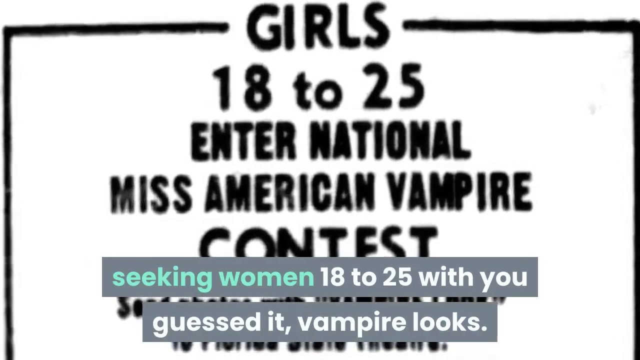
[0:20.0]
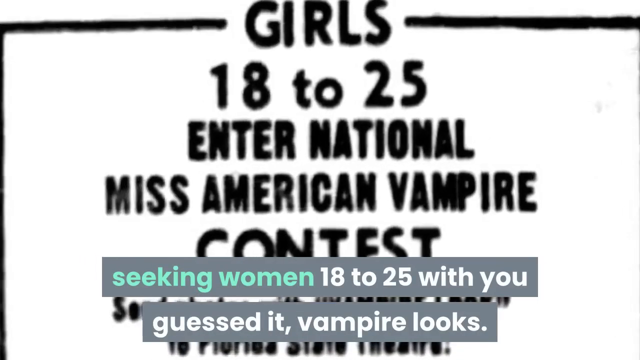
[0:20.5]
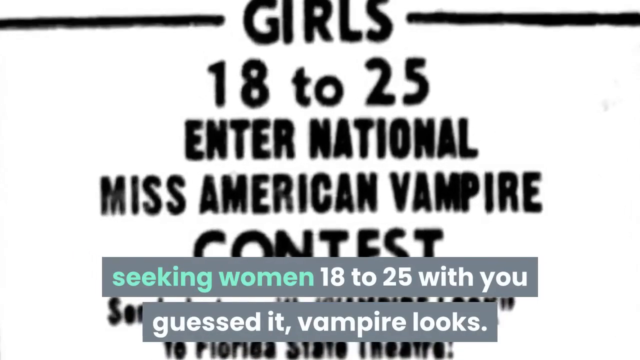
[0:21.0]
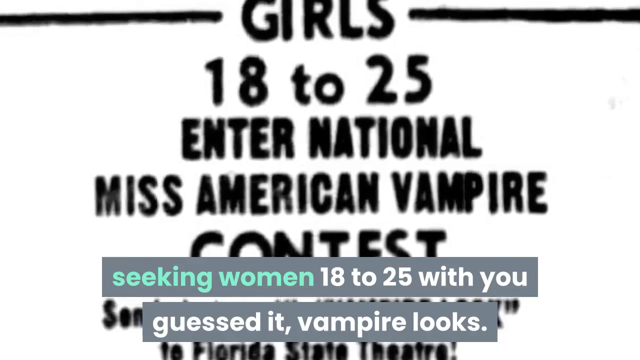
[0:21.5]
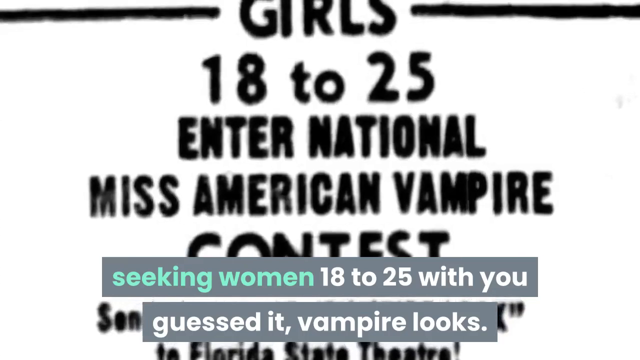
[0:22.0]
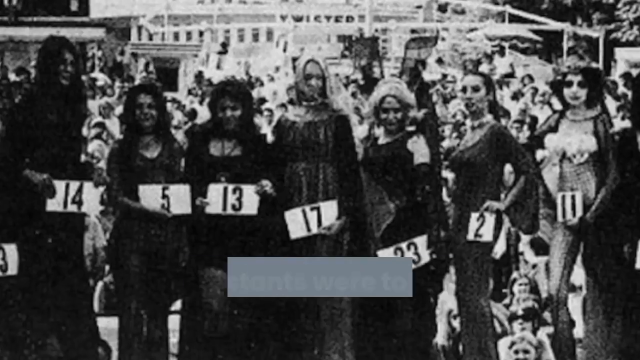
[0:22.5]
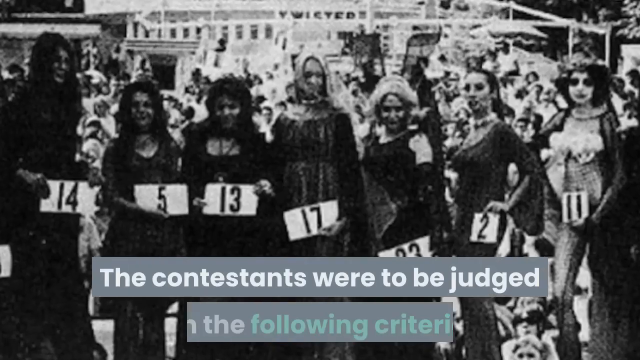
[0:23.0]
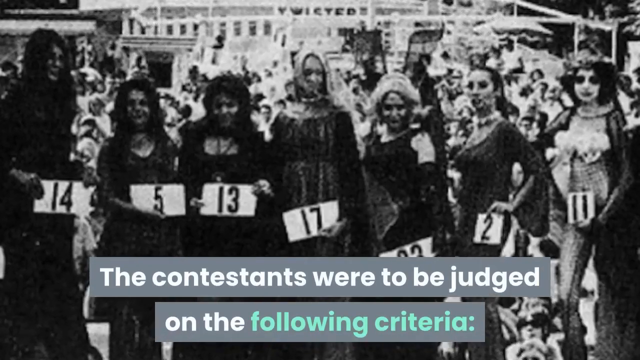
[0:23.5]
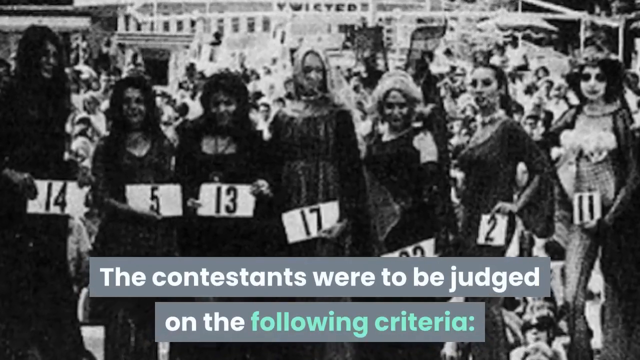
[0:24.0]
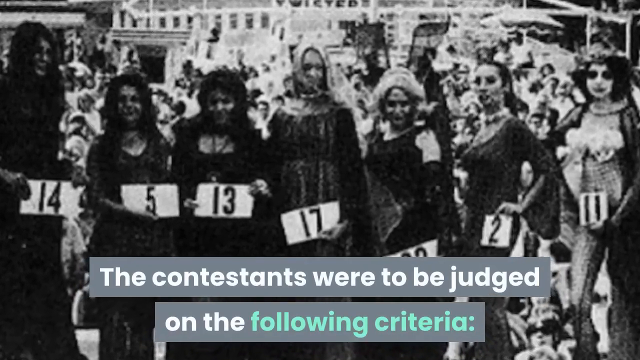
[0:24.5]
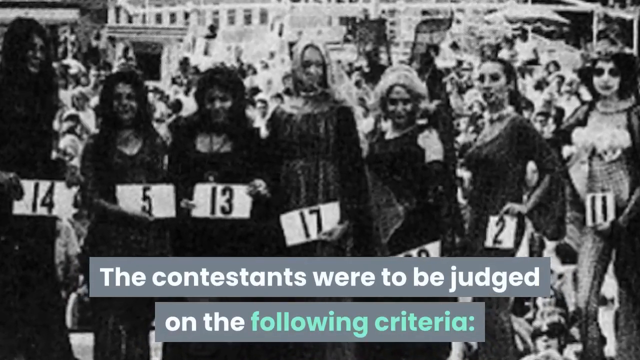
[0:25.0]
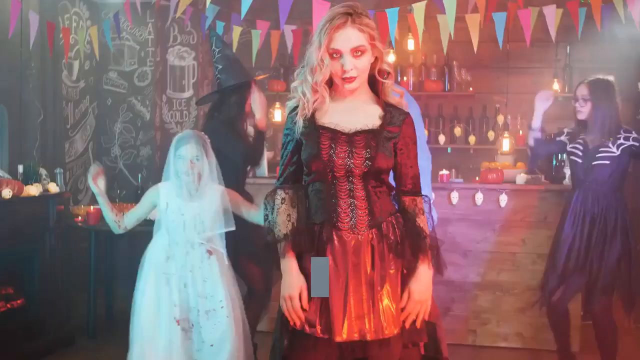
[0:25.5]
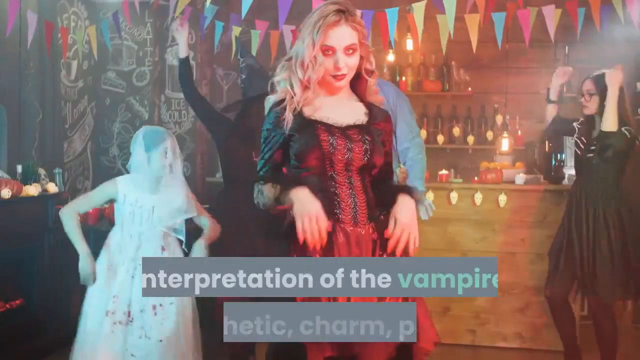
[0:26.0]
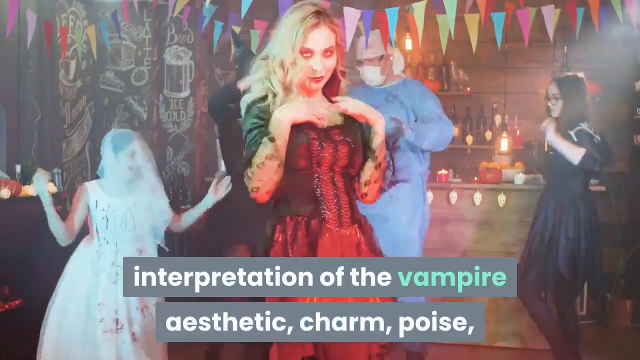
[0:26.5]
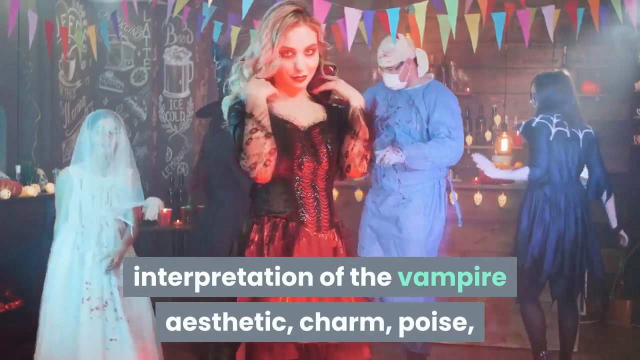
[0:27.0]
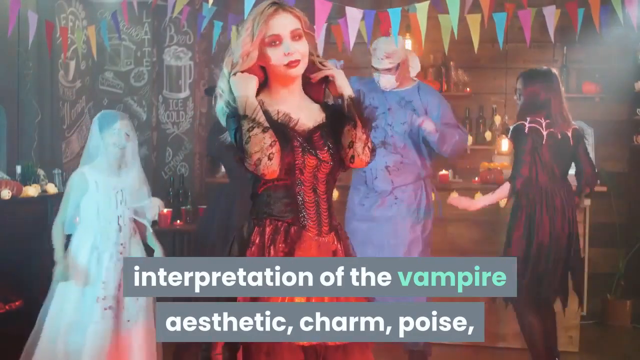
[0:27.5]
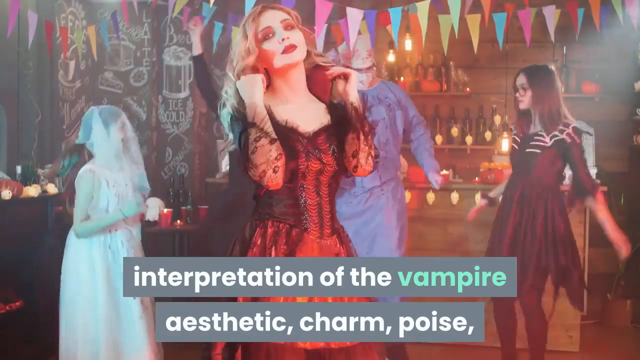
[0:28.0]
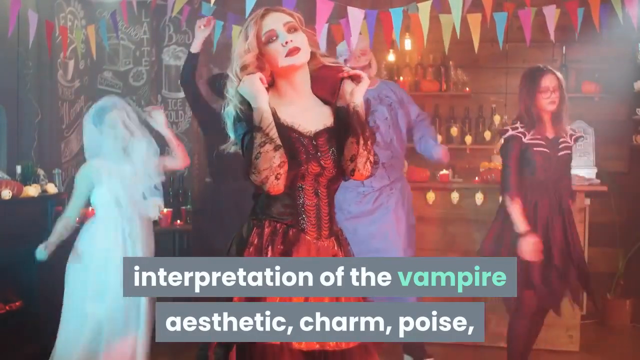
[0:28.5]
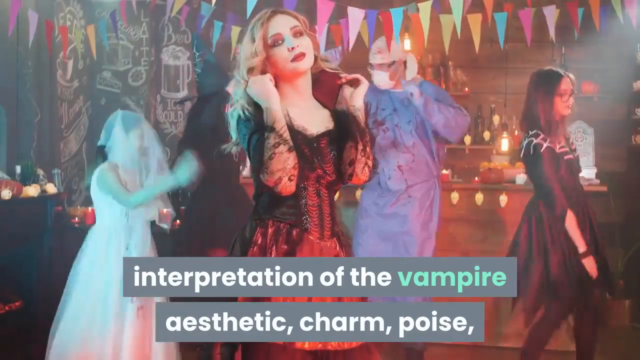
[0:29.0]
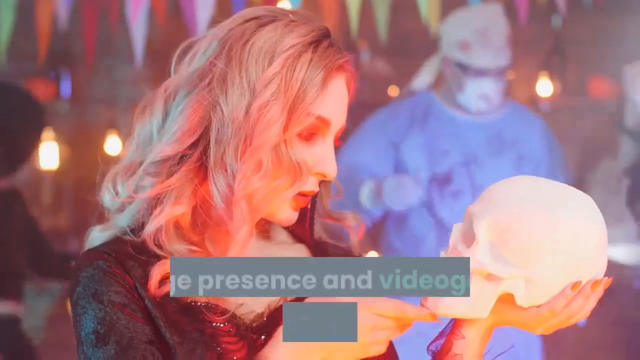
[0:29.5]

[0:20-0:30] Text reads "girls 18 to 25 enter national Miss America vampire contest" and says they are seeking women 18 to 24 with vampire looks. It lists how the contestants were to be judged: "interpretation of the vampire aesthetic, charm and poise, and stage presence."